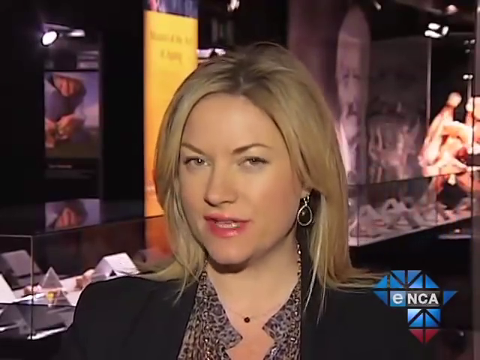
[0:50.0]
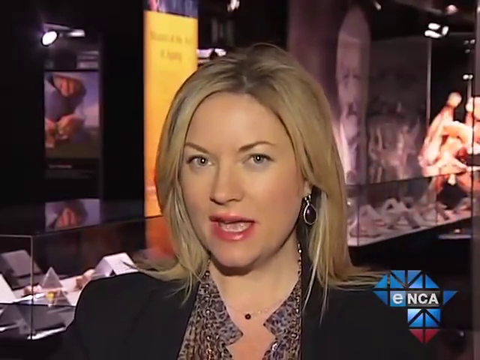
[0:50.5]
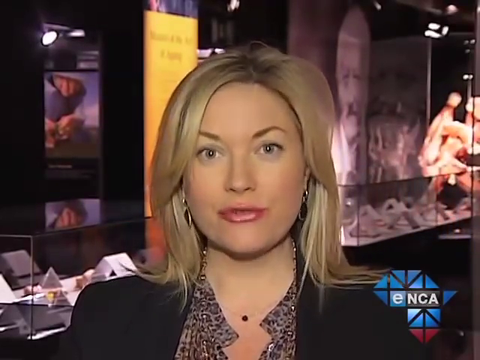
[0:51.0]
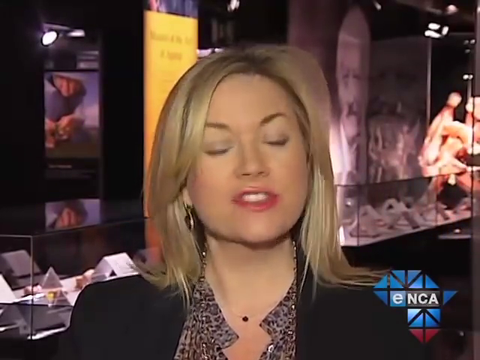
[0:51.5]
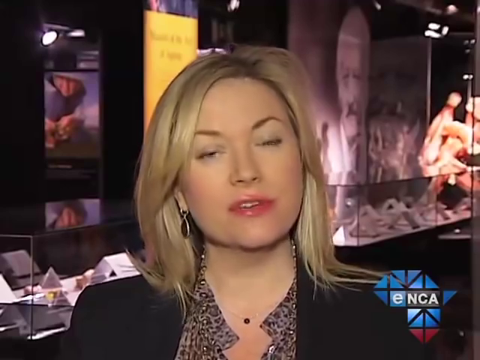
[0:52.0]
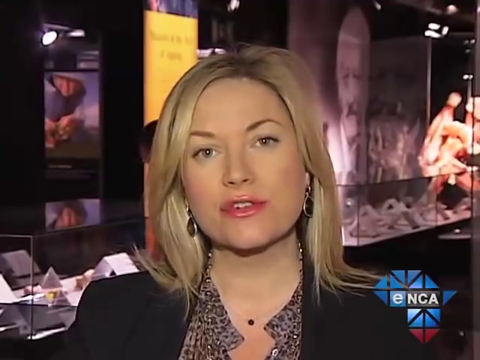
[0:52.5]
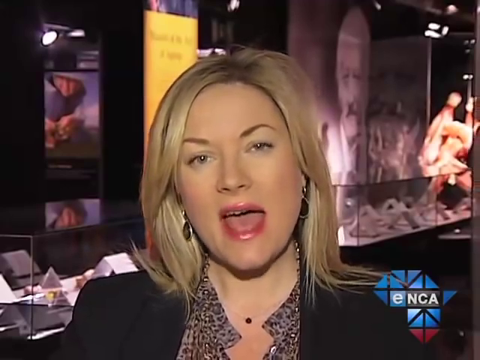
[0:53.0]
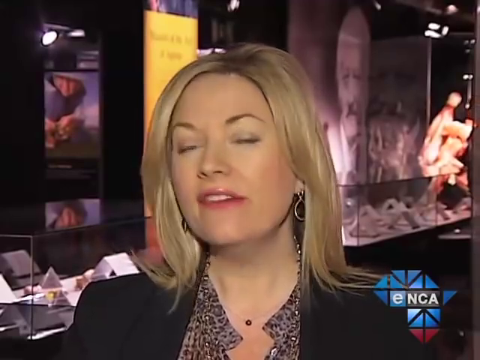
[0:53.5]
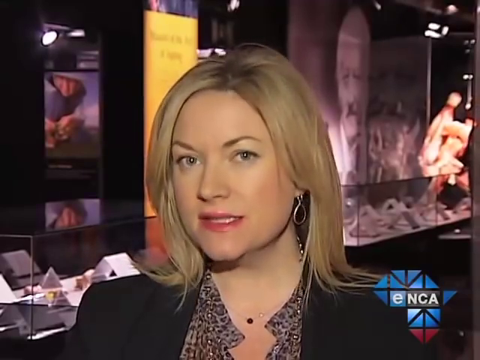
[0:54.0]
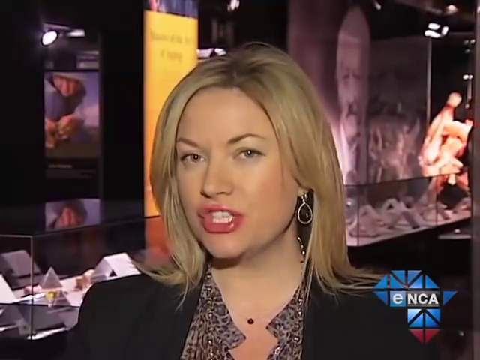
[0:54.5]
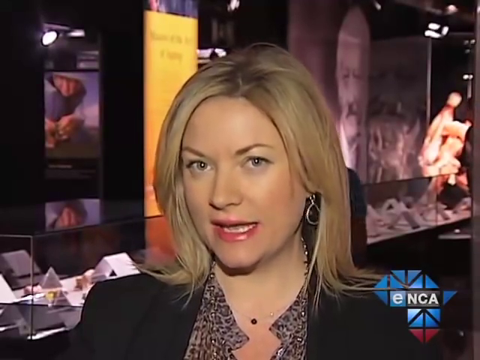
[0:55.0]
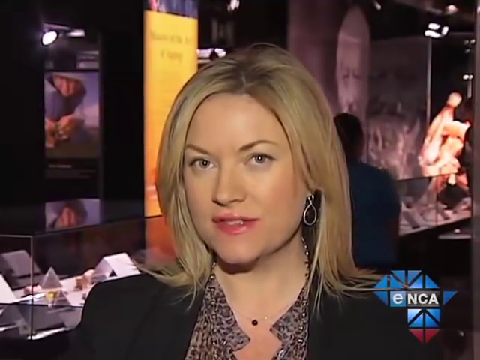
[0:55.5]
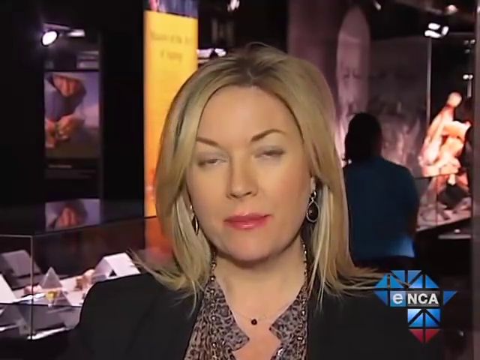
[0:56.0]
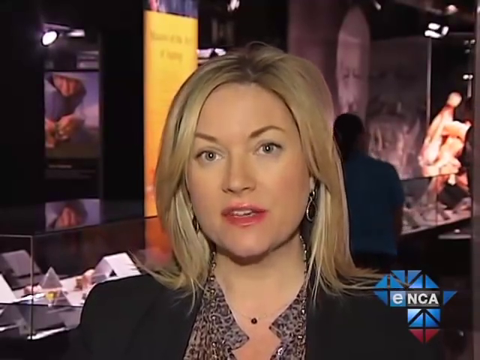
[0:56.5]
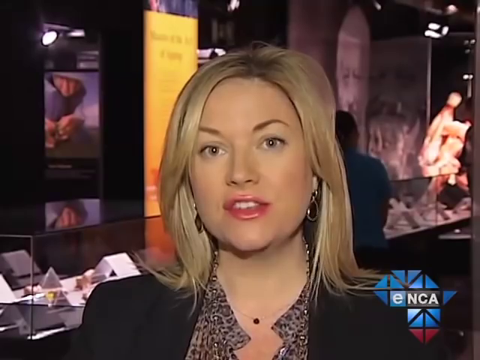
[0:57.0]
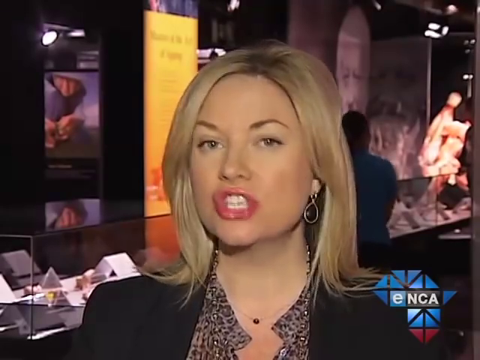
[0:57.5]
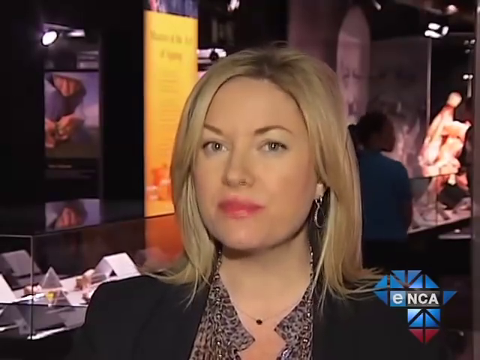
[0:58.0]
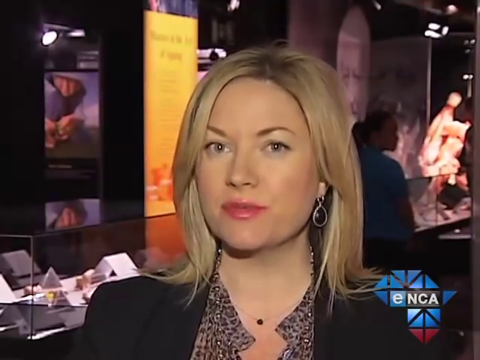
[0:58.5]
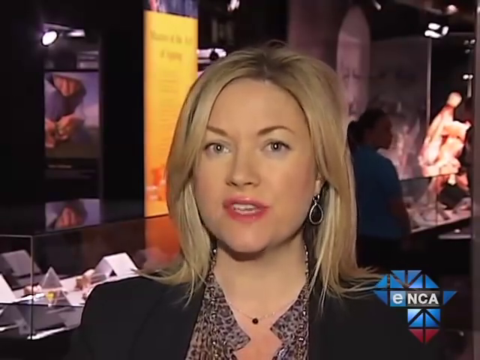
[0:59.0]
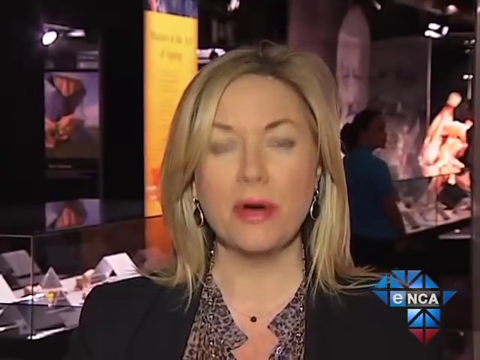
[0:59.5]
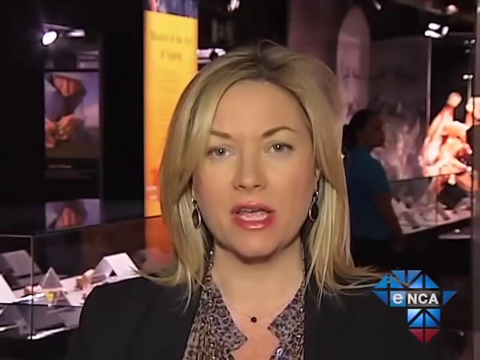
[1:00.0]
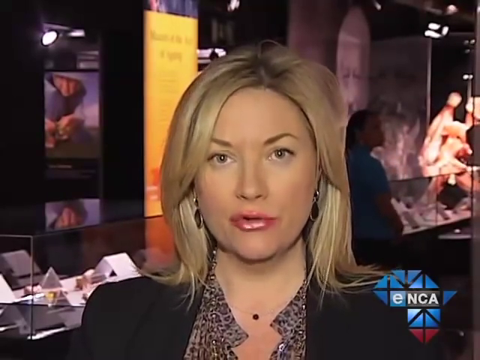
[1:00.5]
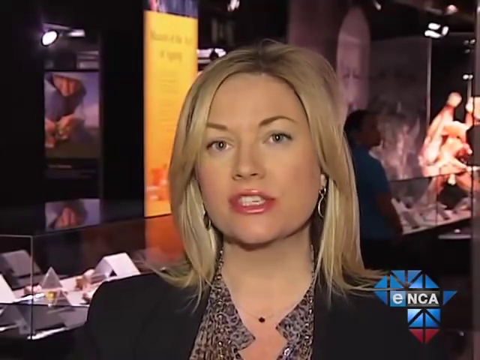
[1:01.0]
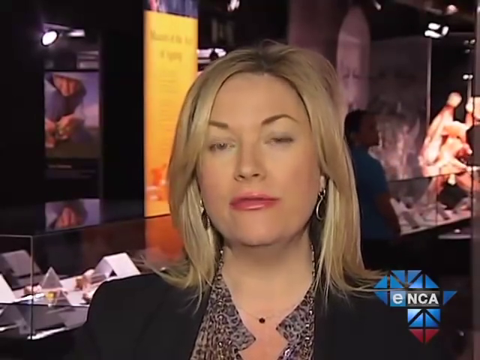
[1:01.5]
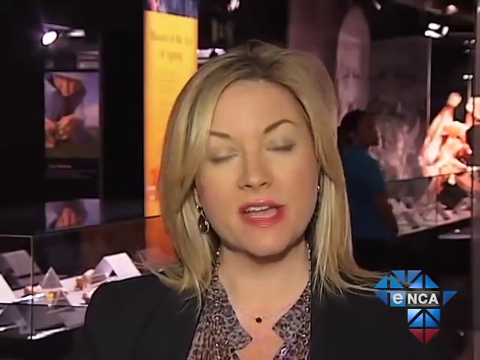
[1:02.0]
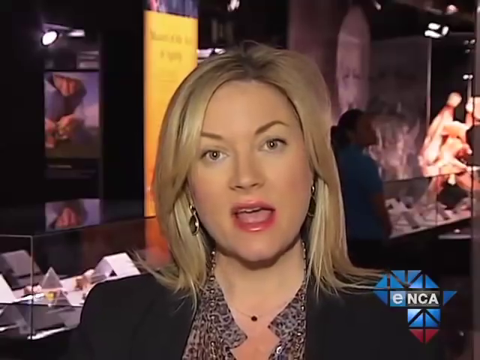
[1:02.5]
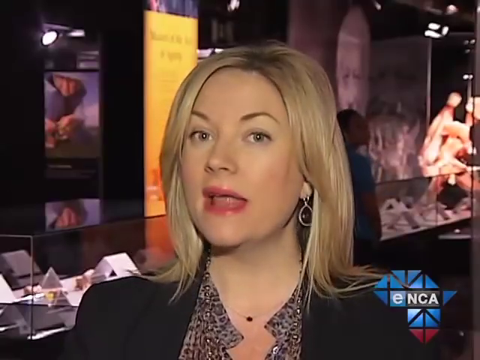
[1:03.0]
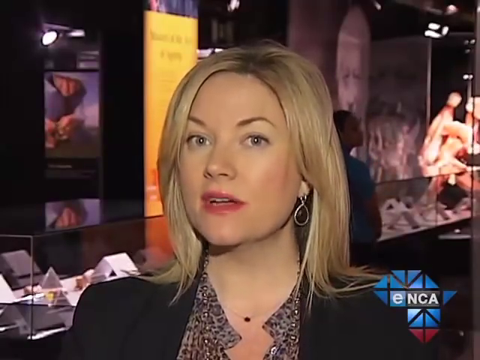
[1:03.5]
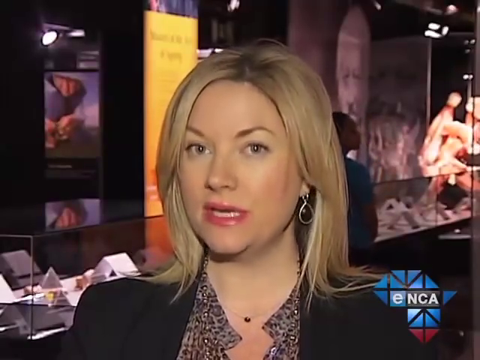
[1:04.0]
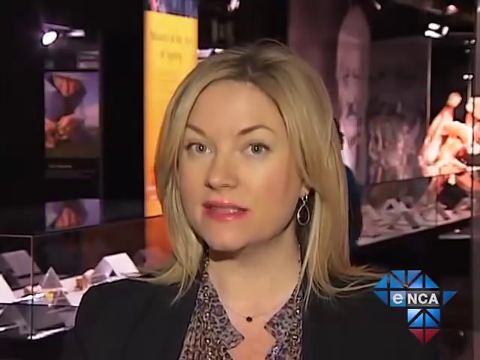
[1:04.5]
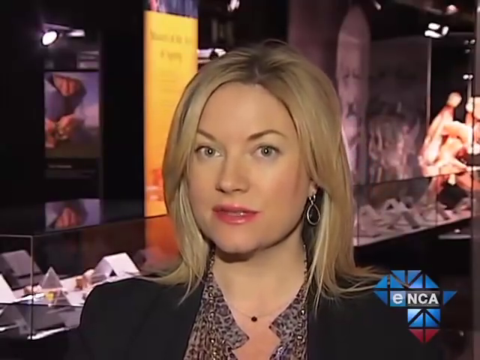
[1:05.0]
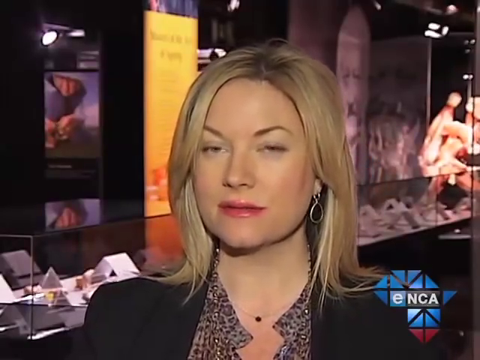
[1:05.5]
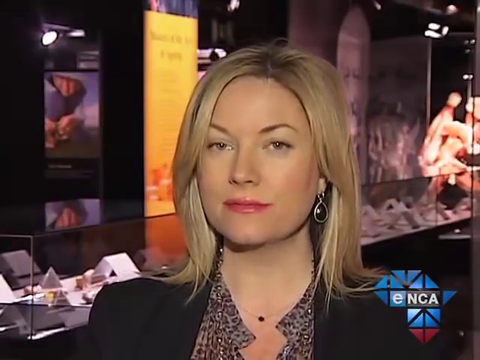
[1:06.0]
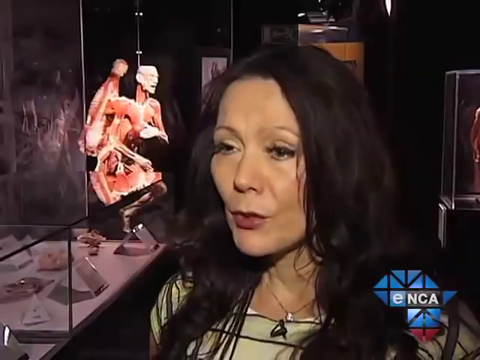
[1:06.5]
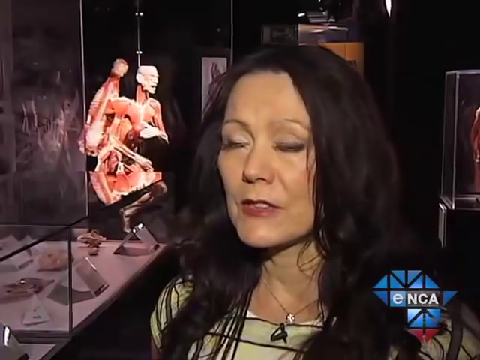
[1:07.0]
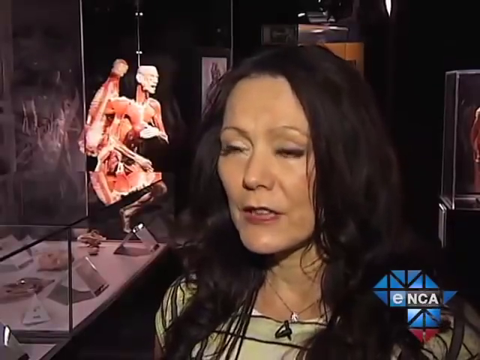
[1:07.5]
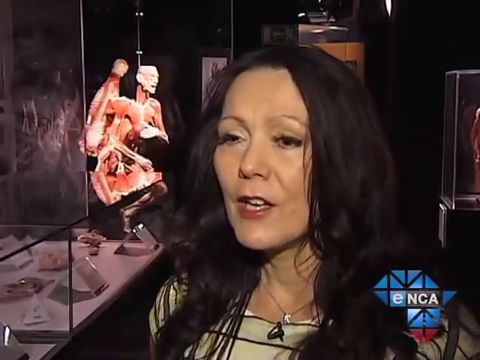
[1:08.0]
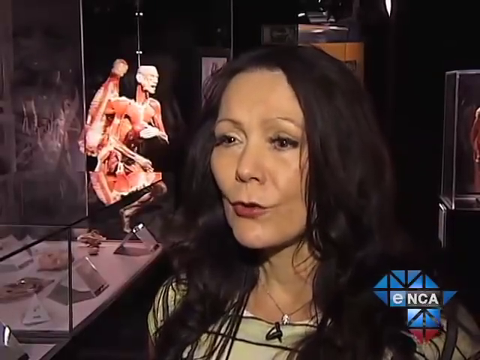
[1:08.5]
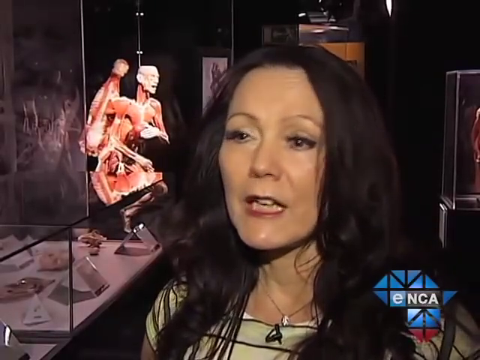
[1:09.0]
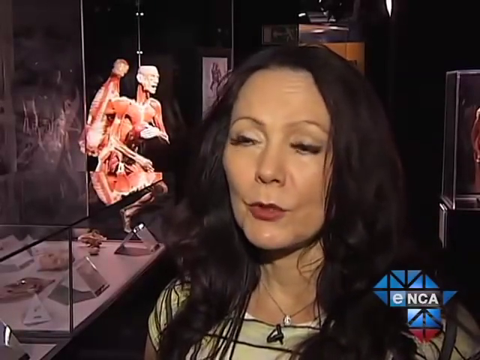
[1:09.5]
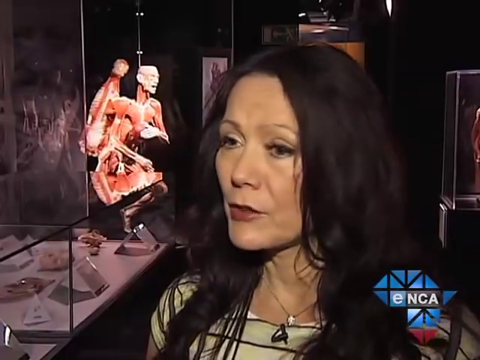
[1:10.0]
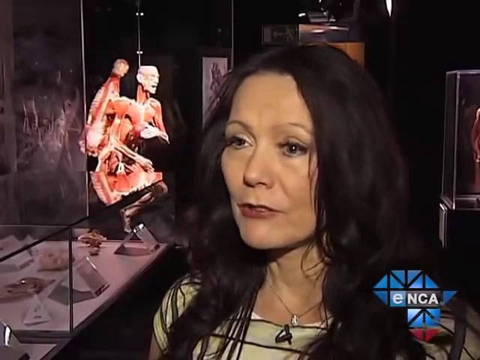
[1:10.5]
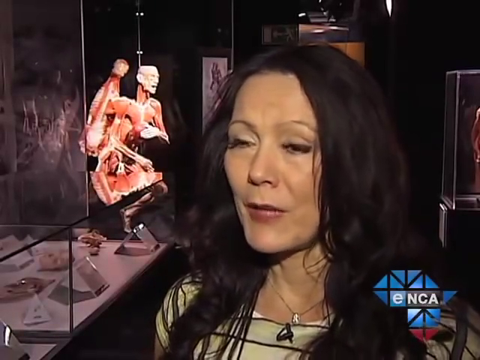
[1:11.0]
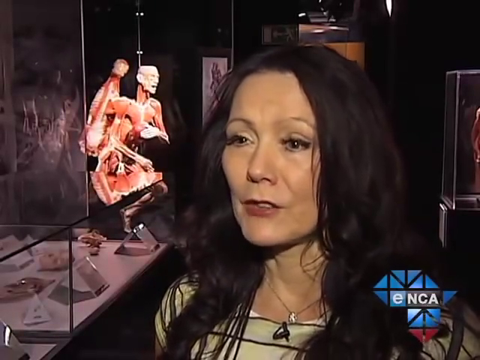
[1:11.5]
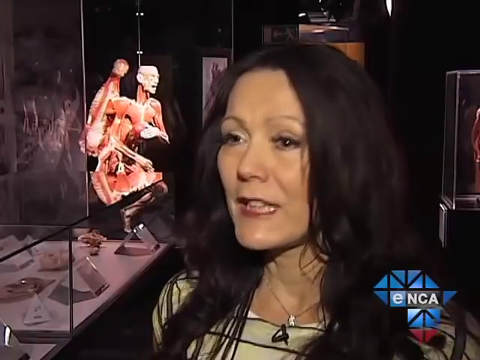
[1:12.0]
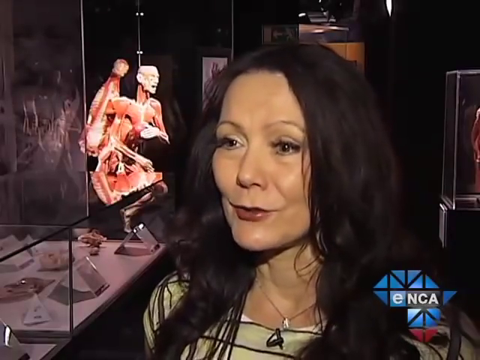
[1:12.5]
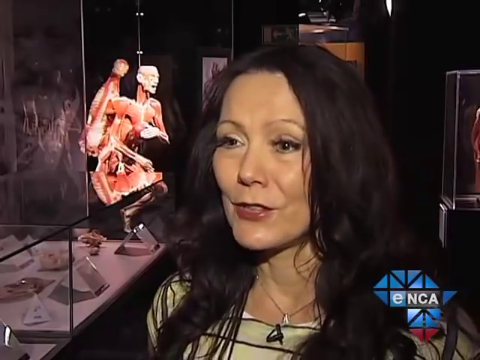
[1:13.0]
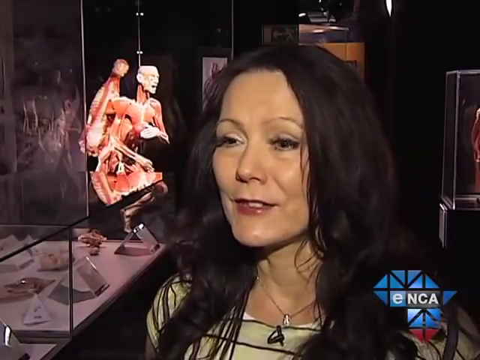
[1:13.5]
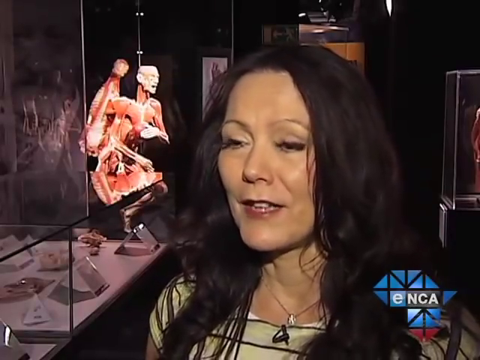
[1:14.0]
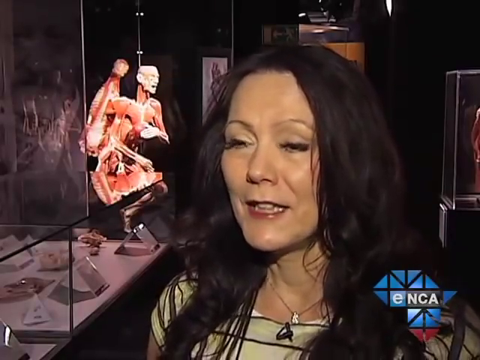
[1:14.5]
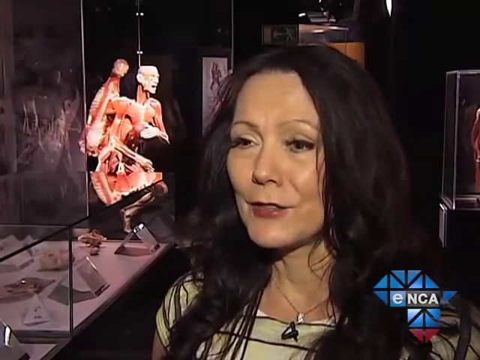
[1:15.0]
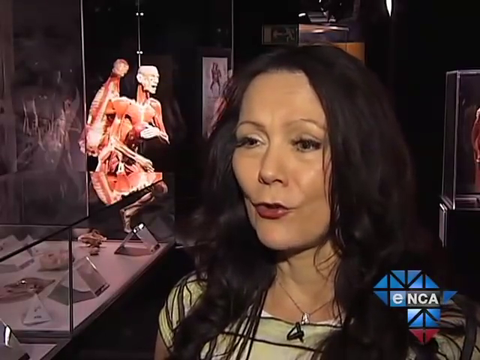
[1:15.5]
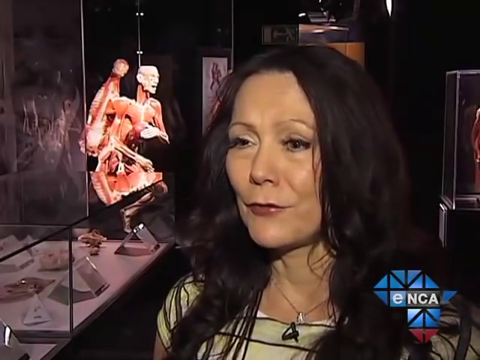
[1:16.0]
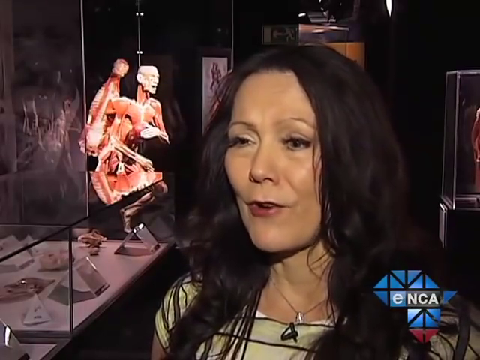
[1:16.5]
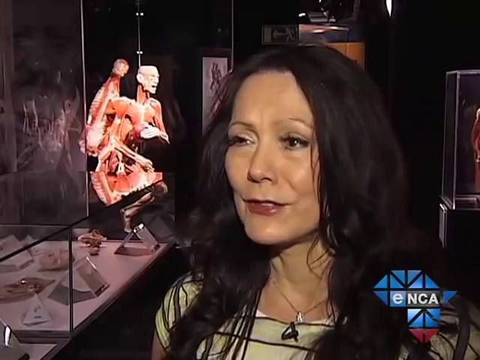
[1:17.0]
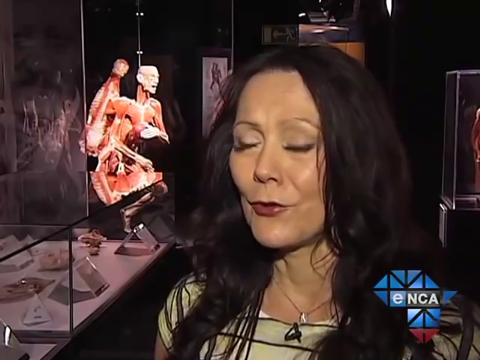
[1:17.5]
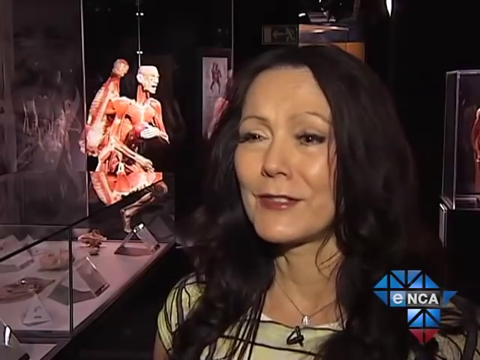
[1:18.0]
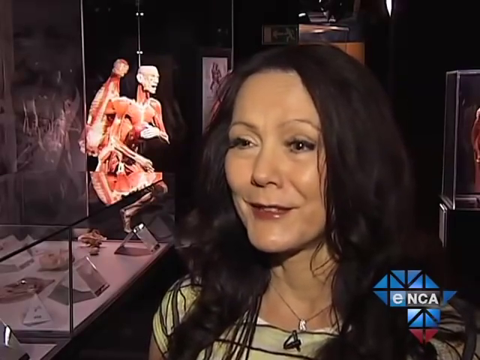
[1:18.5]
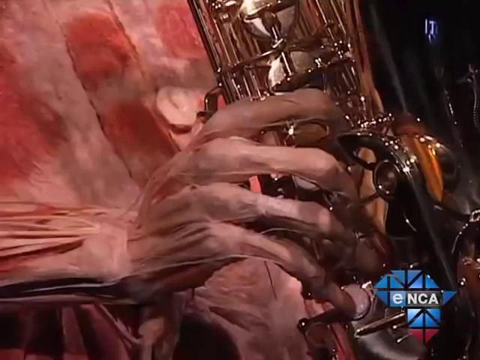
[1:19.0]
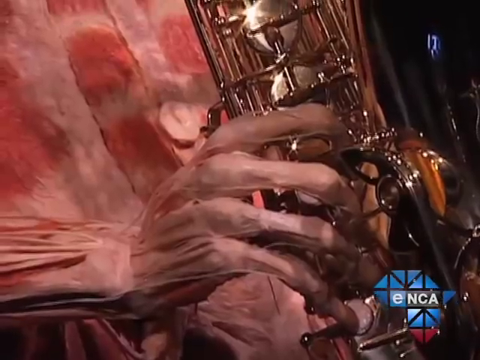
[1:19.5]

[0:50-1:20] A reporter talks about a display of the human body in what seems to be a scientific museum. She is a woman with blonde hair, shiny lipstick and dangly earrings, wearing a dress and maybe a blazer over it. The displays show bodies with the skin apparently peeled back, revealing the muscles, tendons and inner workings of the whole body; one display shows a human who looks like he is playing a saxophone, with the fingers and other parts of the body visible. The reporter is the main focus, and the video then cuts to her interviewing another woman with slightly darker hair who answers questions. The channel appears to be ENCA, shown in the lower right-hand corner.